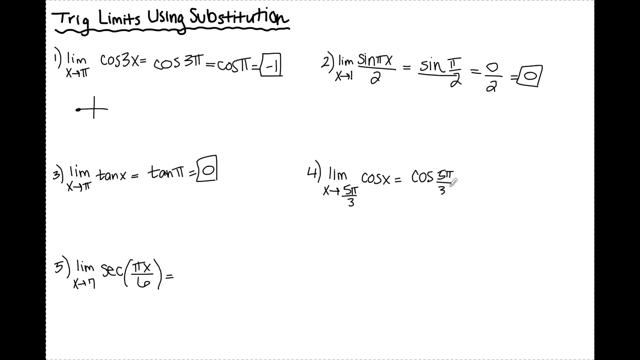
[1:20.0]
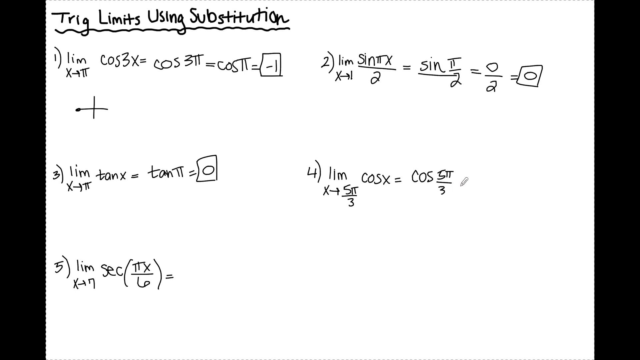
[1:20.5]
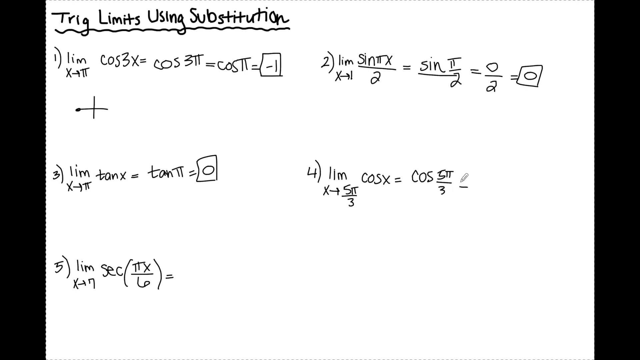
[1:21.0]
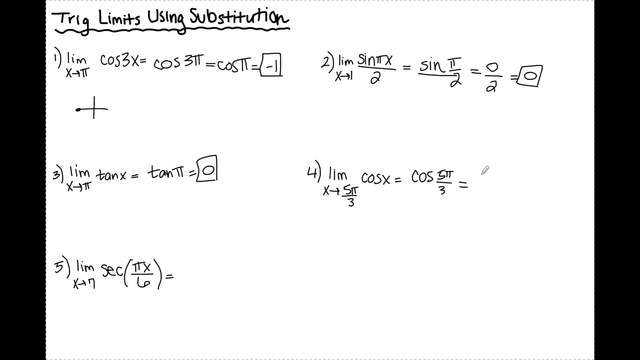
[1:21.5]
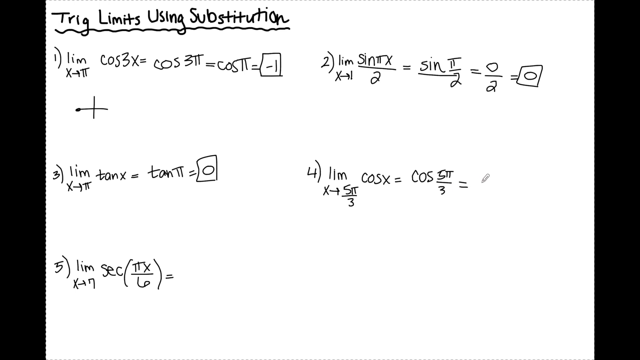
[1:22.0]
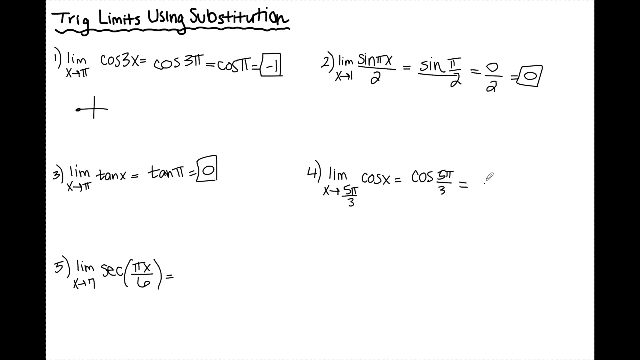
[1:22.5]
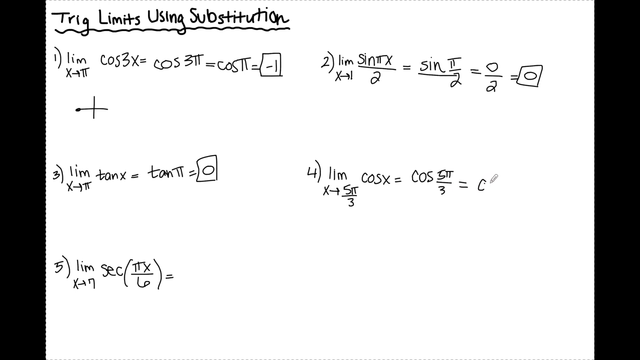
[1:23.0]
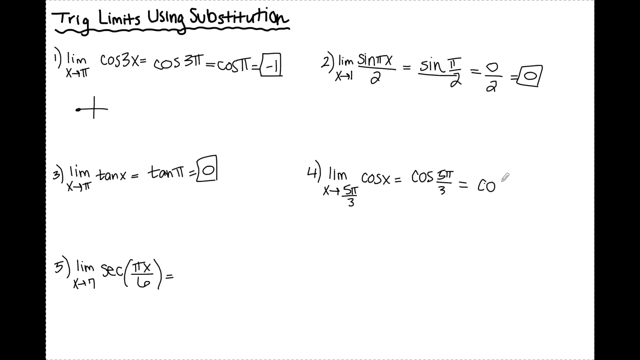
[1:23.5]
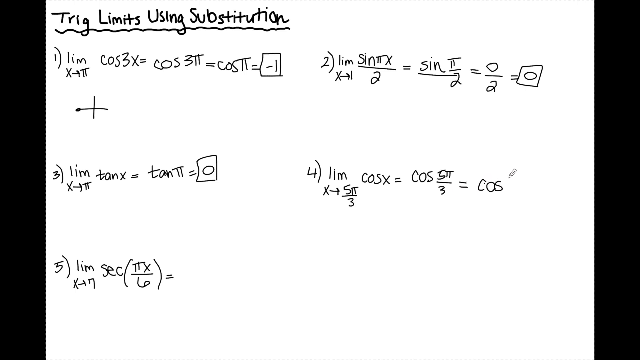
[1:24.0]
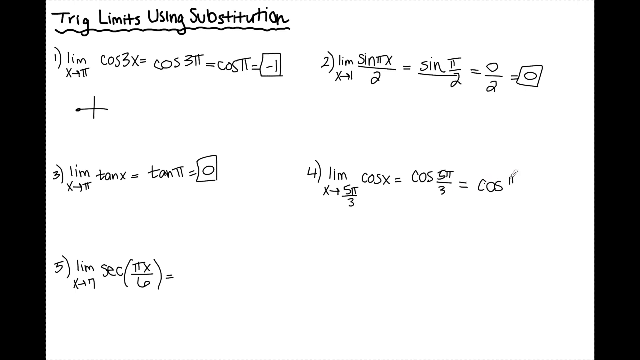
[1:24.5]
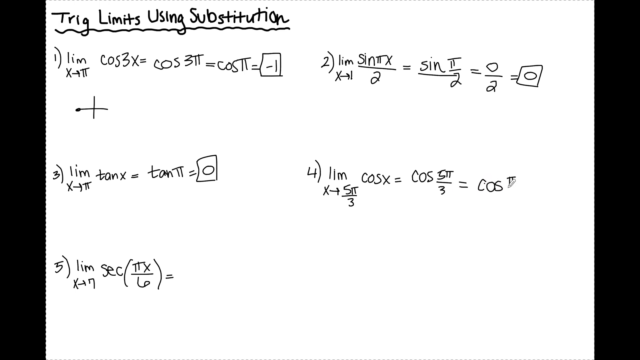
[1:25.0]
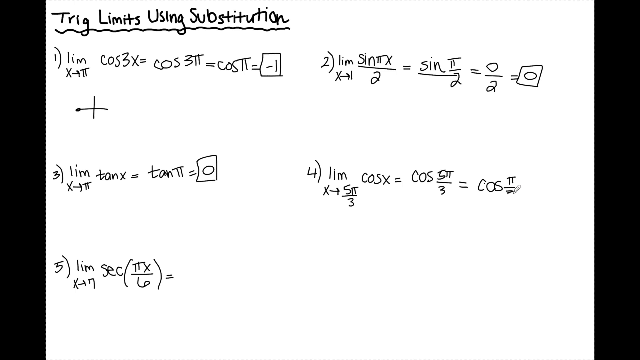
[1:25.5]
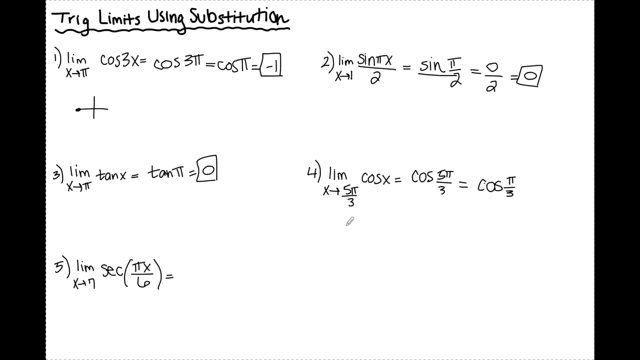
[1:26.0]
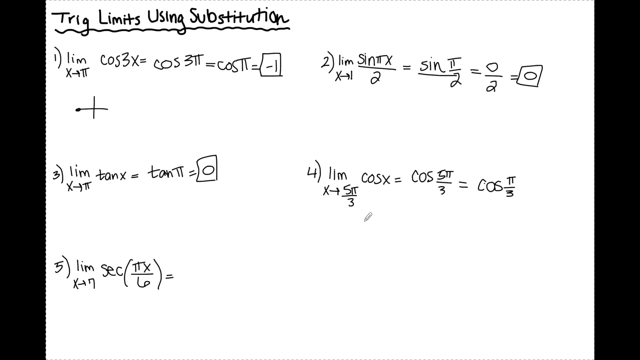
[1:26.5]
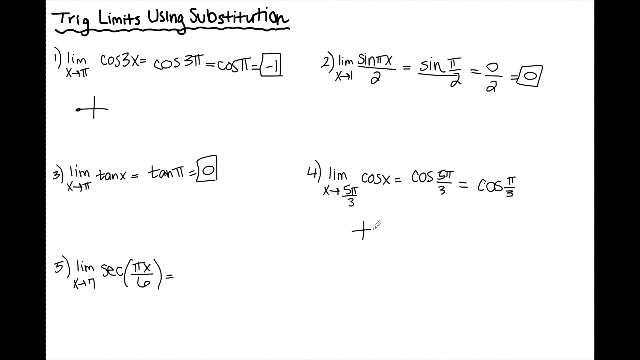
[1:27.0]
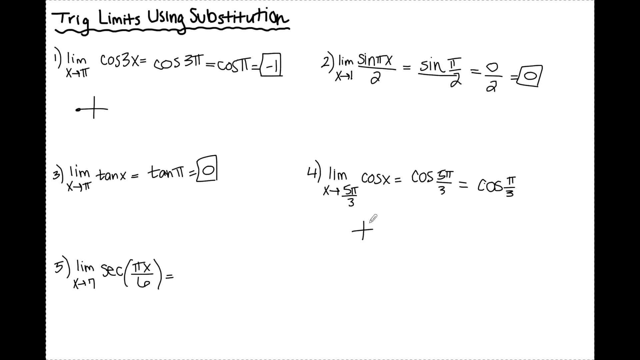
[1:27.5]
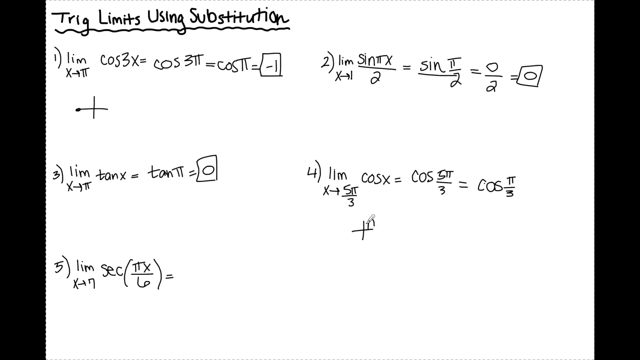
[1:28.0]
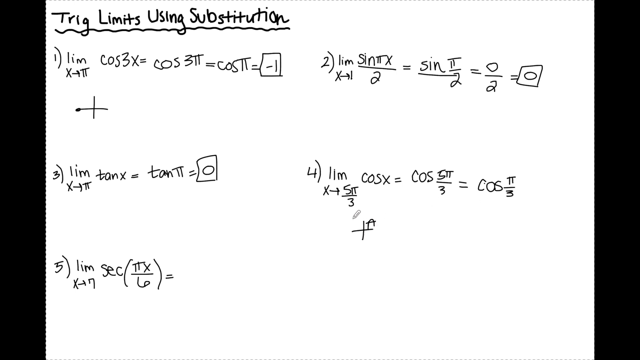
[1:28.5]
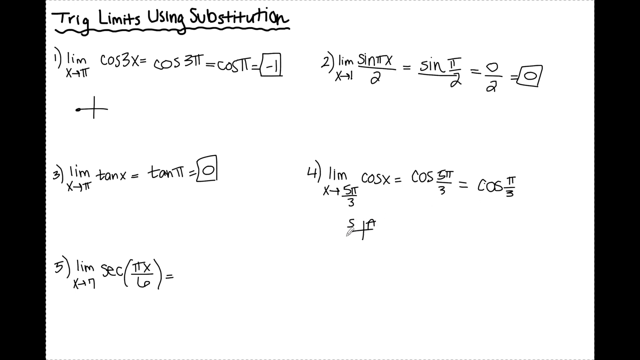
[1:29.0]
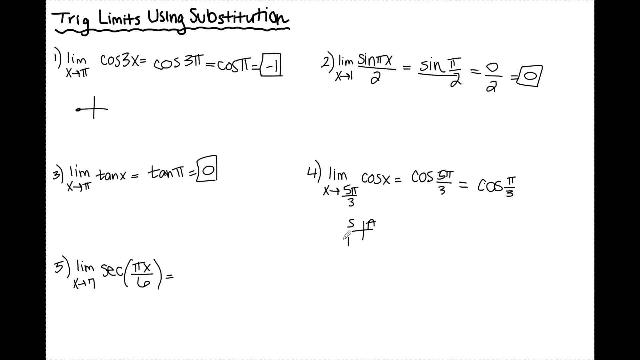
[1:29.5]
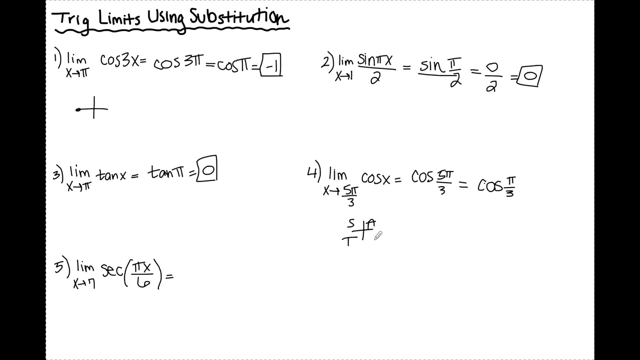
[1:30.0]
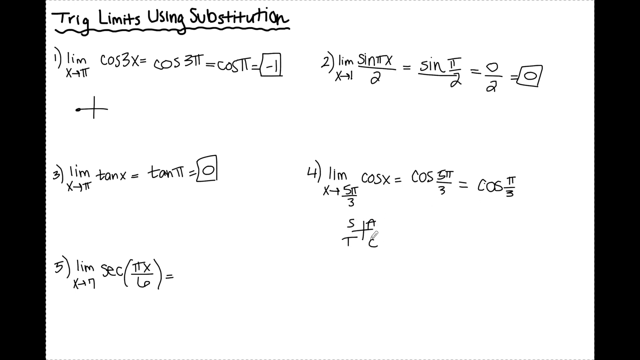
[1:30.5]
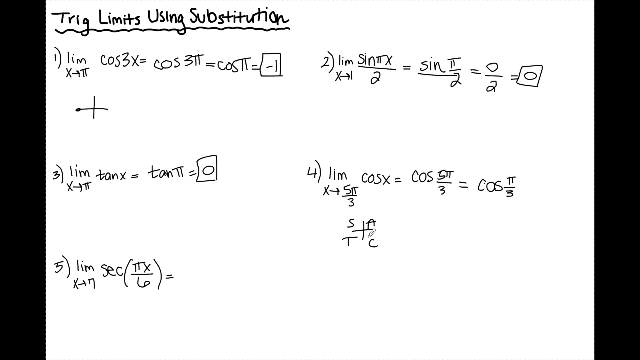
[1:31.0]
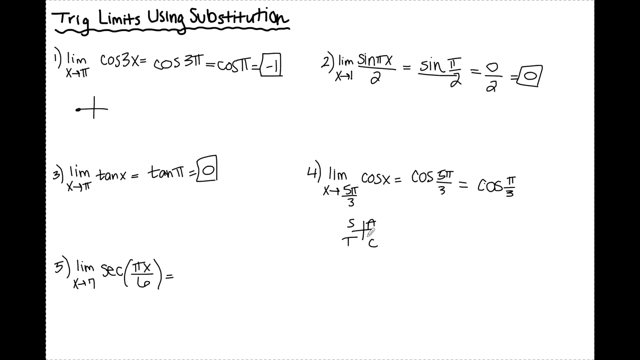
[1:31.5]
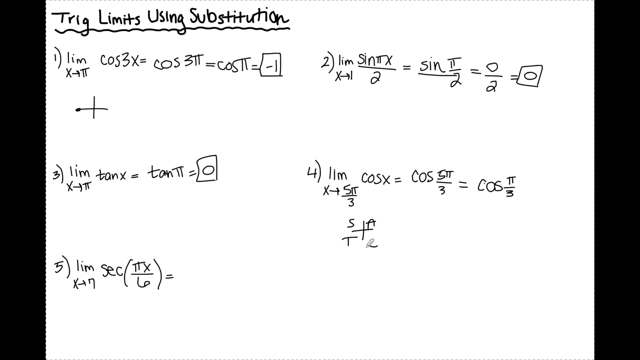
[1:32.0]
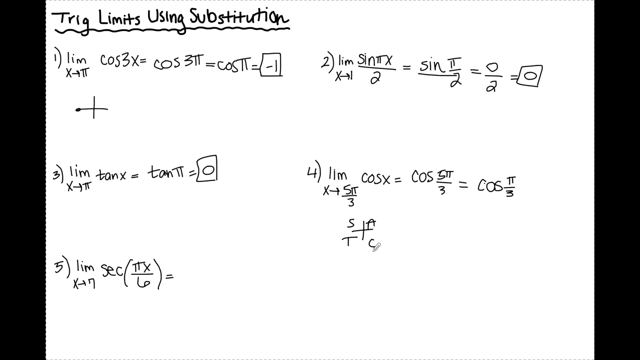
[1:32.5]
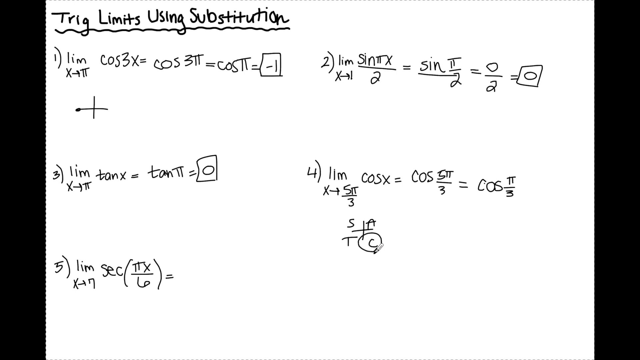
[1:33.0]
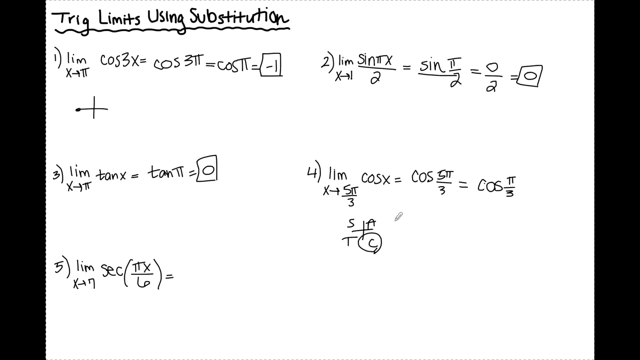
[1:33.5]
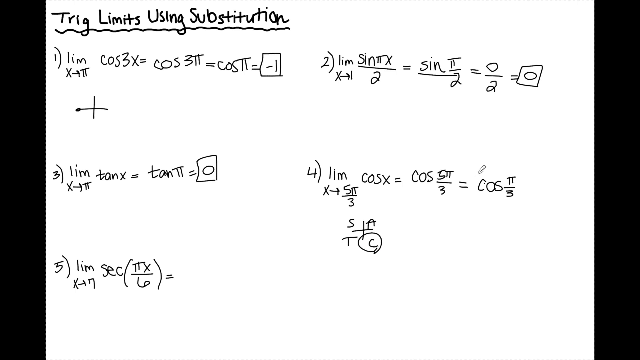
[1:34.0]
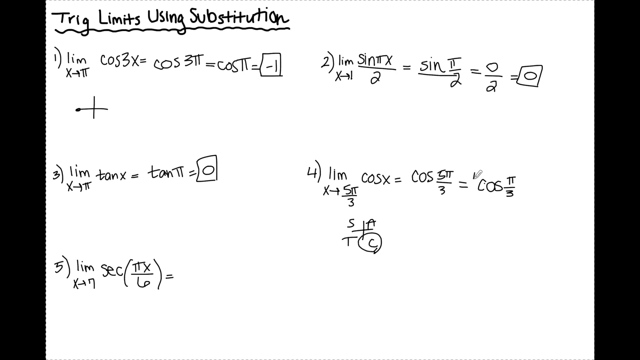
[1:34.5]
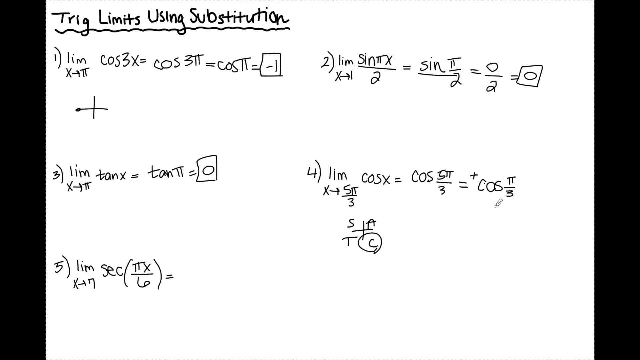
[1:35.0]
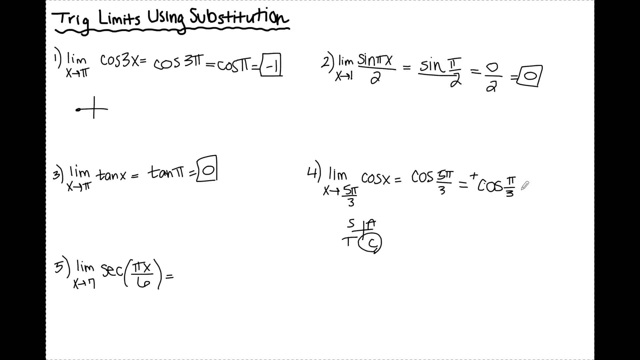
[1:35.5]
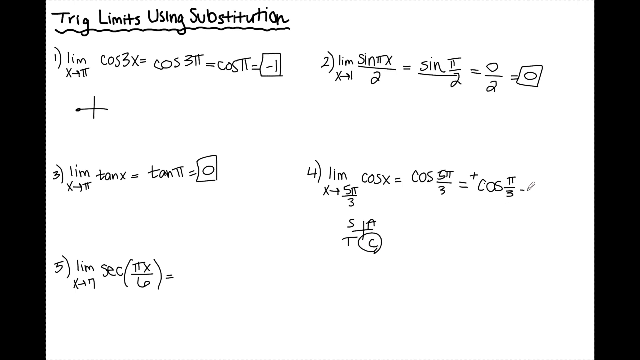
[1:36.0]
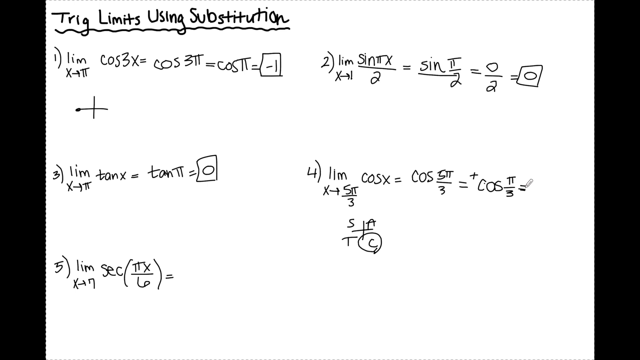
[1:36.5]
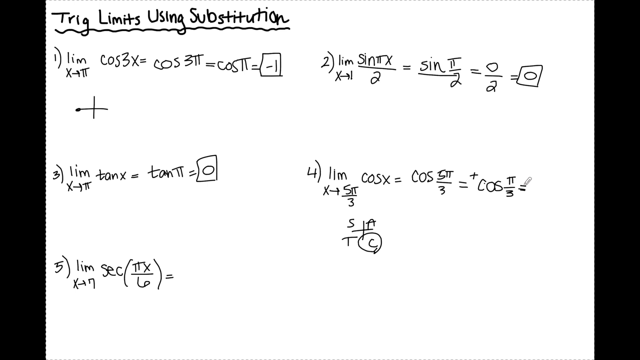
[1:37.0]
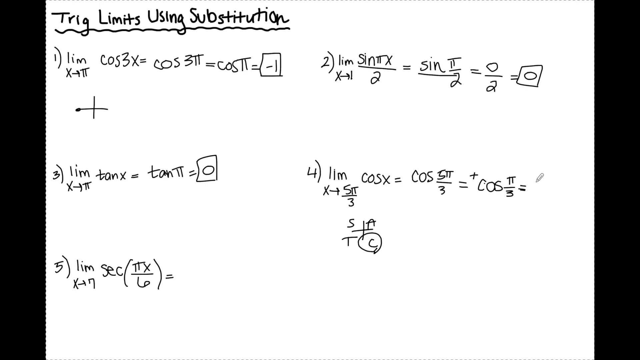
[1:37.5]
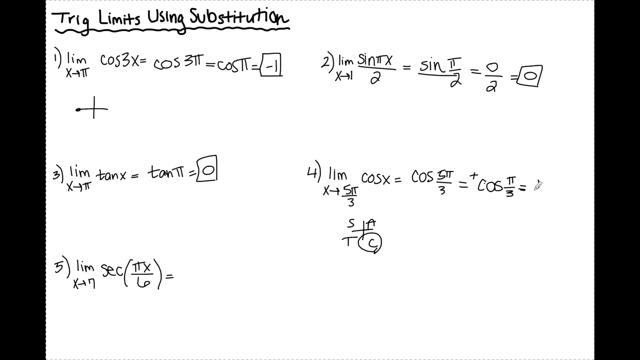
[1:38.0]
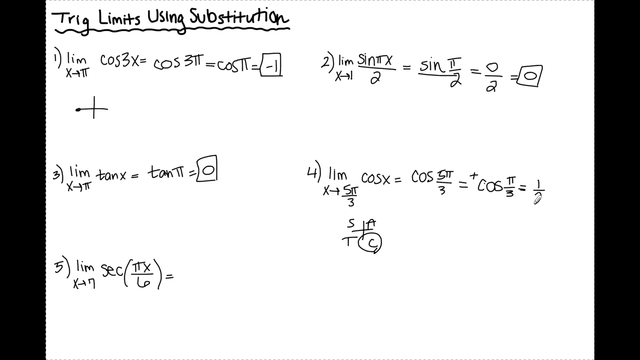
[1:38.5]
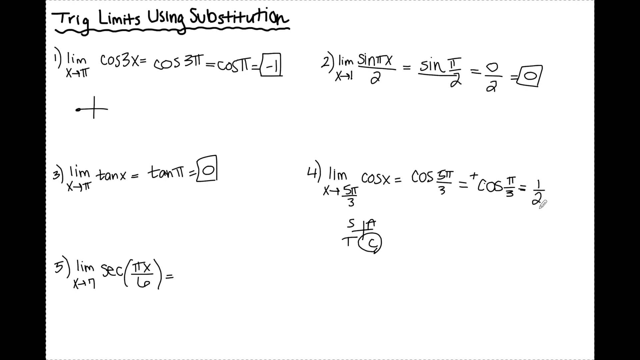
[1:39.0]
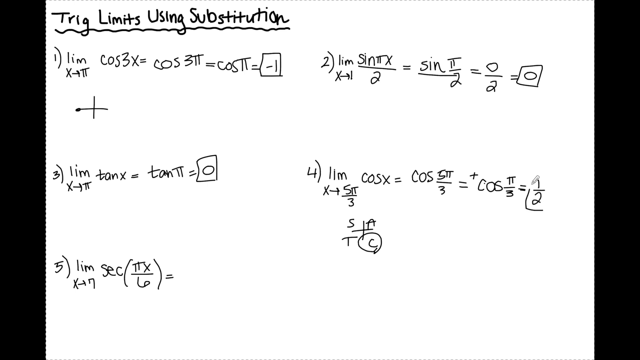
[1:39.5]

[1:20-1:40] On equation 4, after the simplified equation cosine 5 pi divided by 3, the cursor writes another equals sign and then cosine pi divided by three. It draws a cross with letters in its sections, including A, T, and C. It circles the C in one of the quadrants of the cross. It adds a plus sign above the cosine pi divided by three it just wrote, then writes another equals sign after it and writes one divided by two. It begins drawing a box around the answer for item four, like the other equations, and is about to finish the box as the segment ends.